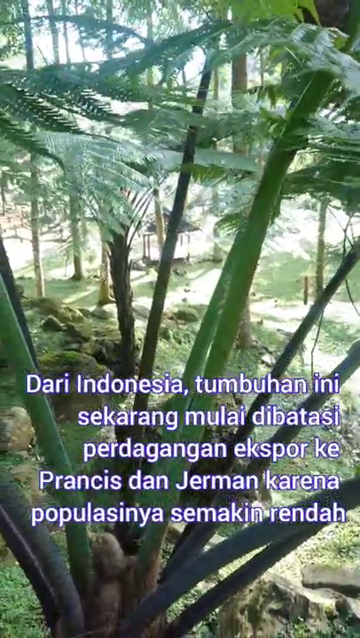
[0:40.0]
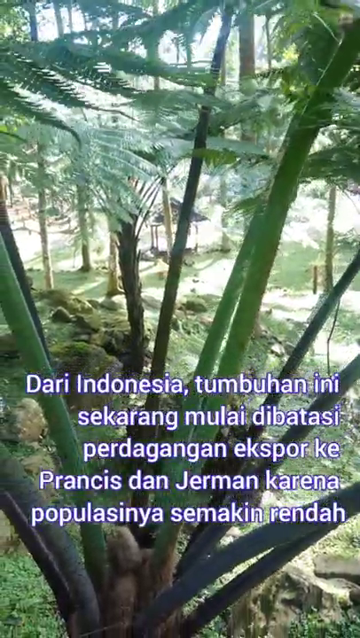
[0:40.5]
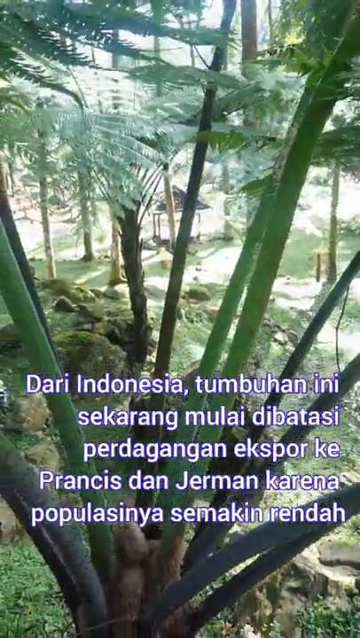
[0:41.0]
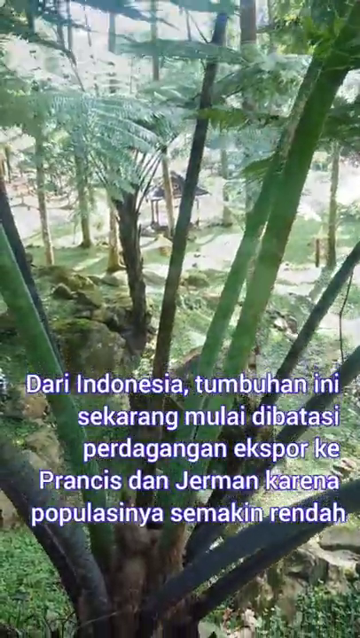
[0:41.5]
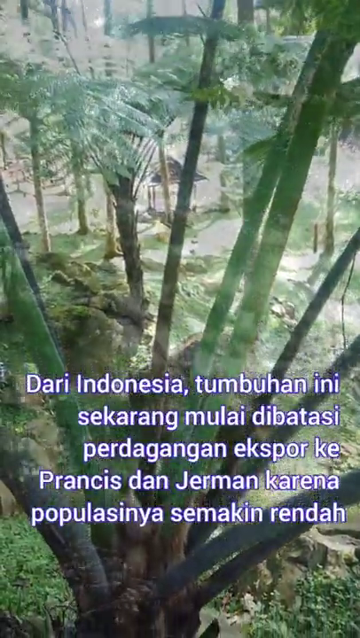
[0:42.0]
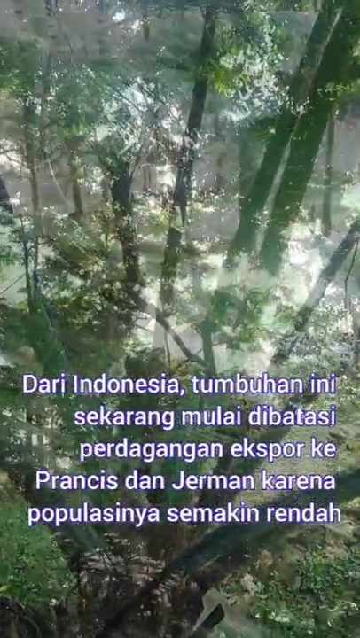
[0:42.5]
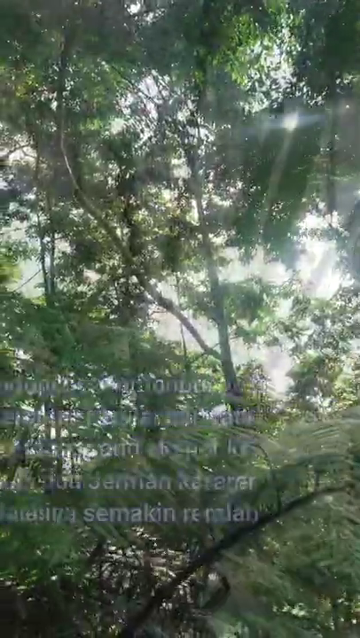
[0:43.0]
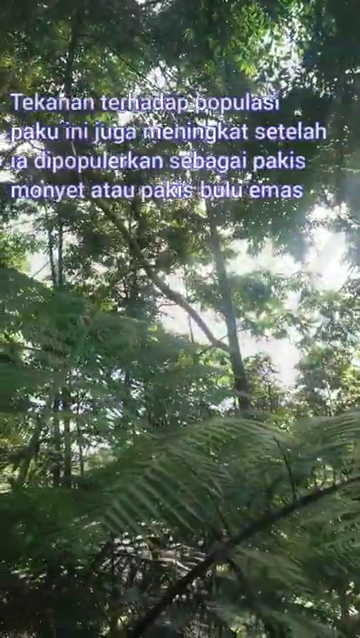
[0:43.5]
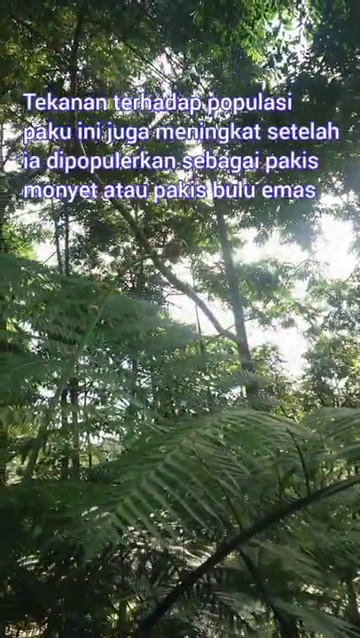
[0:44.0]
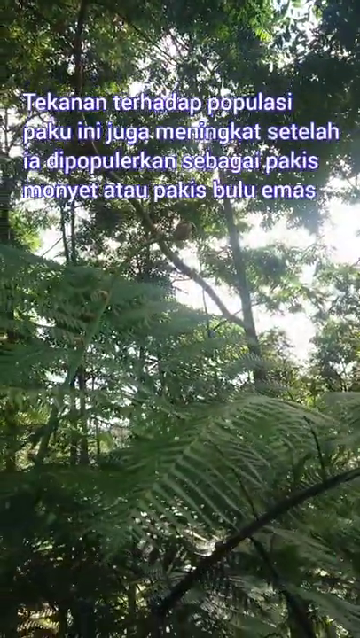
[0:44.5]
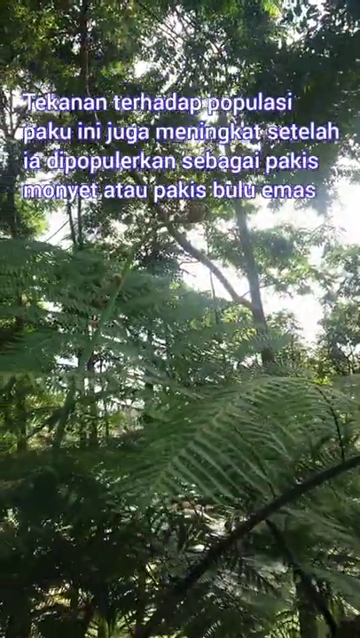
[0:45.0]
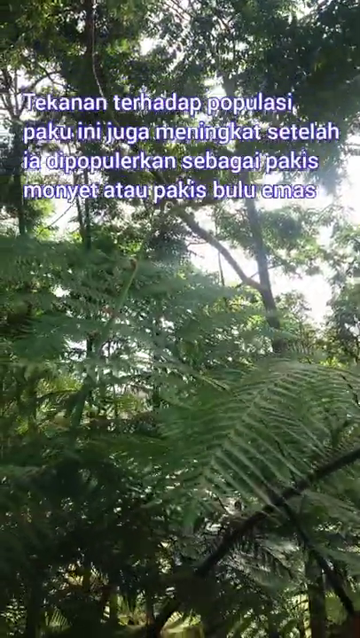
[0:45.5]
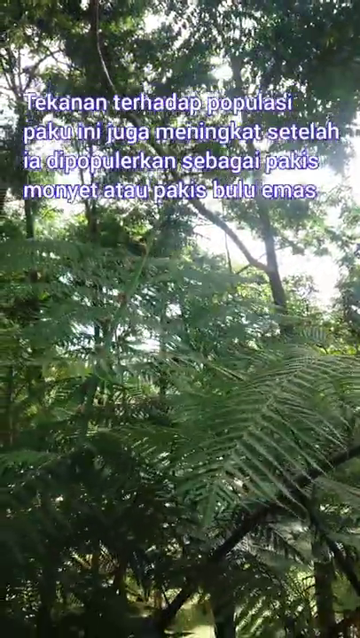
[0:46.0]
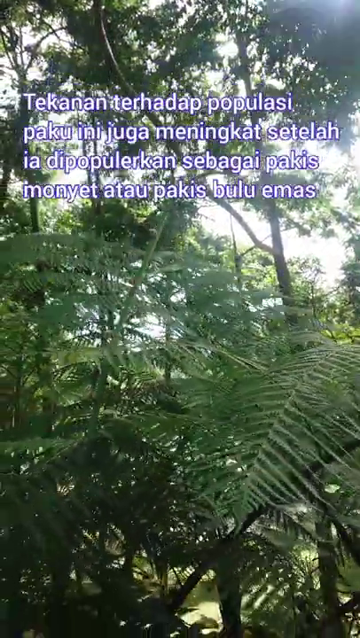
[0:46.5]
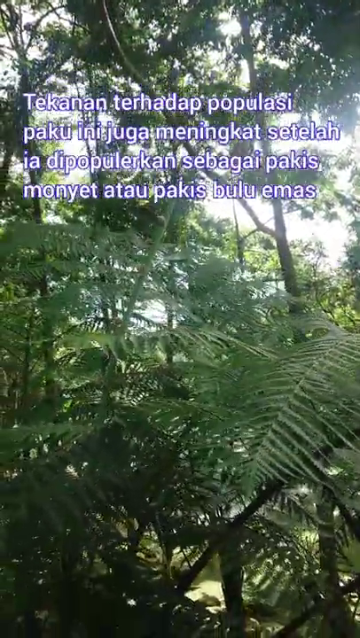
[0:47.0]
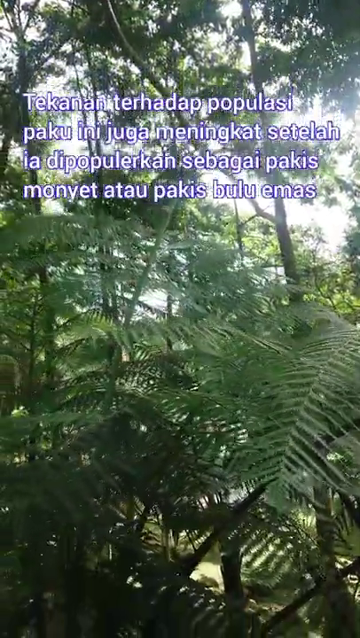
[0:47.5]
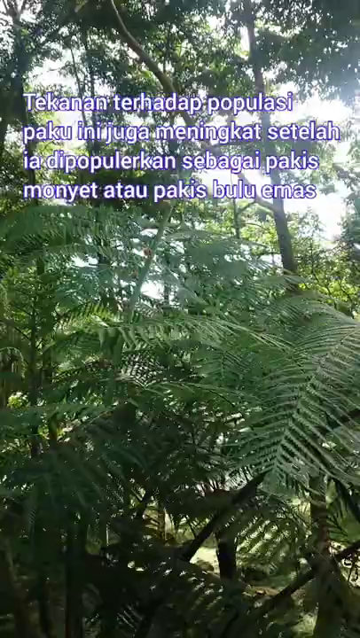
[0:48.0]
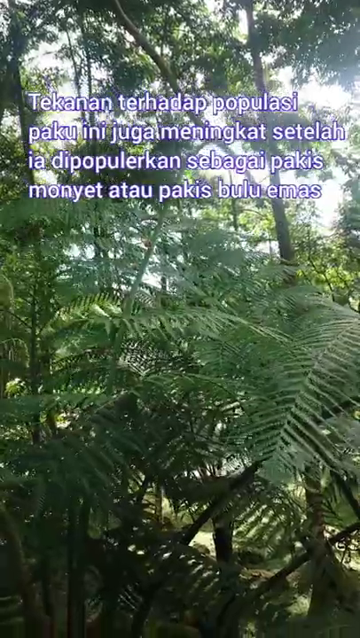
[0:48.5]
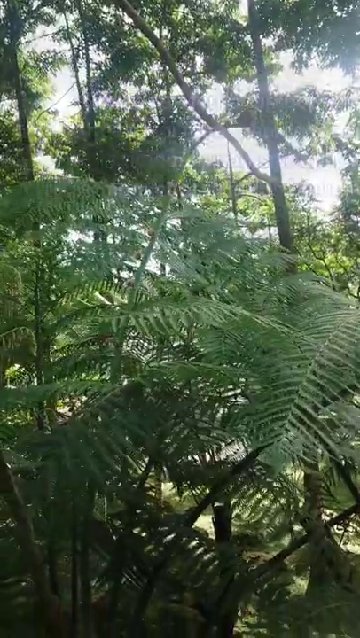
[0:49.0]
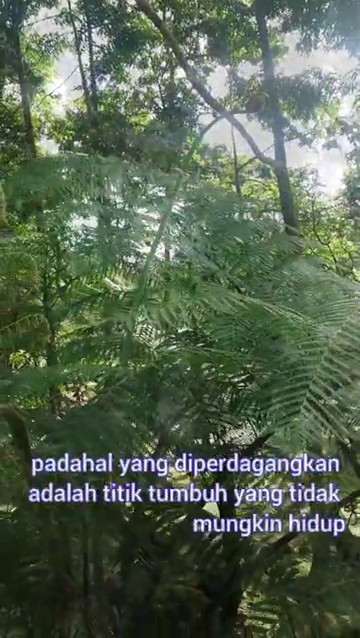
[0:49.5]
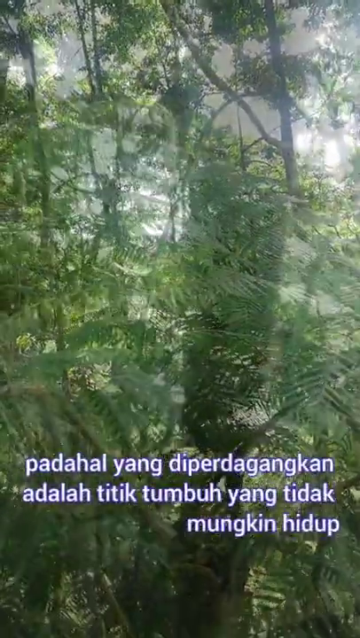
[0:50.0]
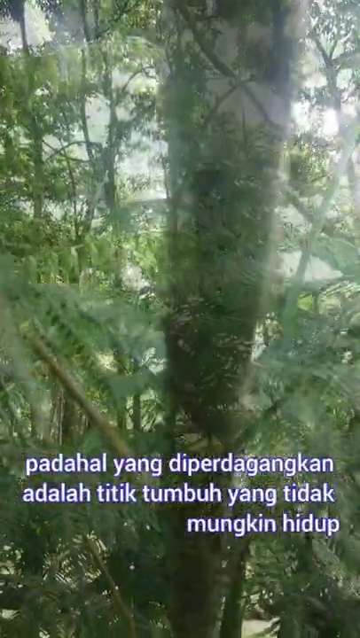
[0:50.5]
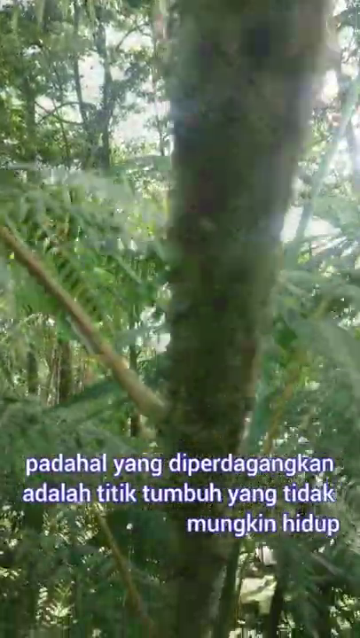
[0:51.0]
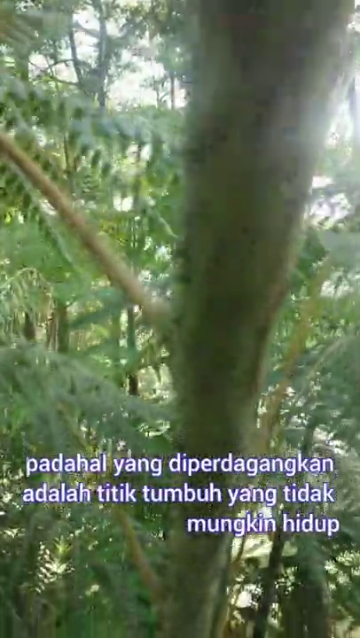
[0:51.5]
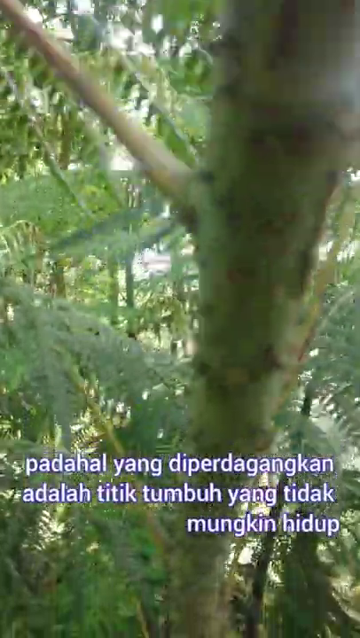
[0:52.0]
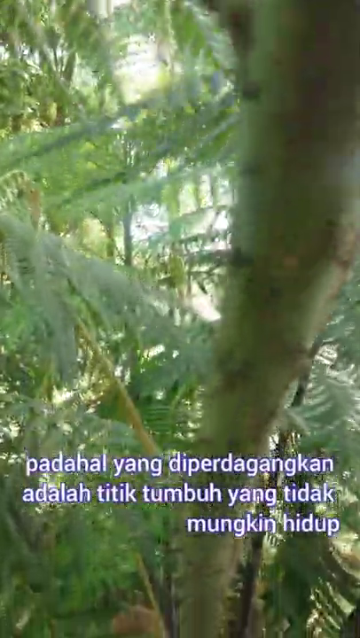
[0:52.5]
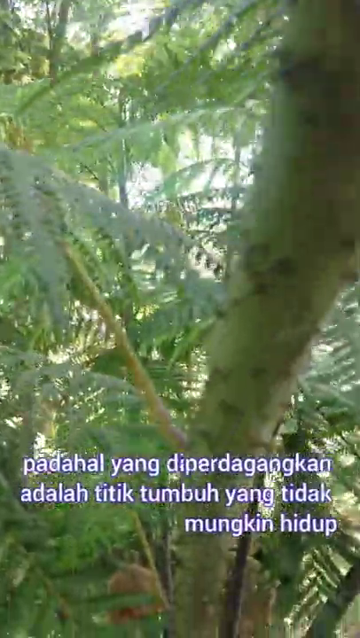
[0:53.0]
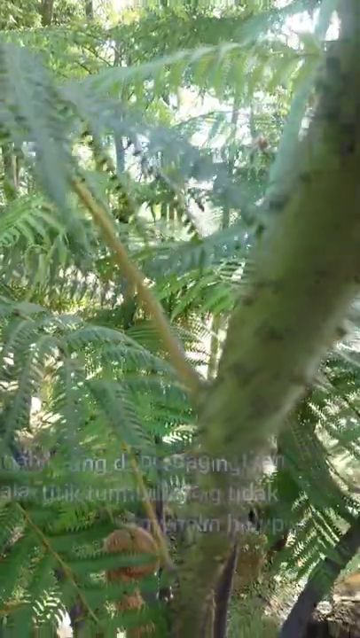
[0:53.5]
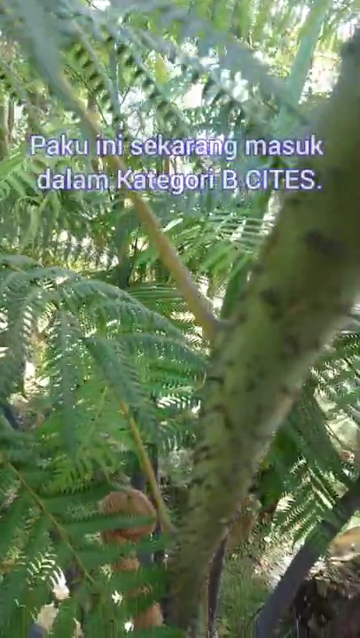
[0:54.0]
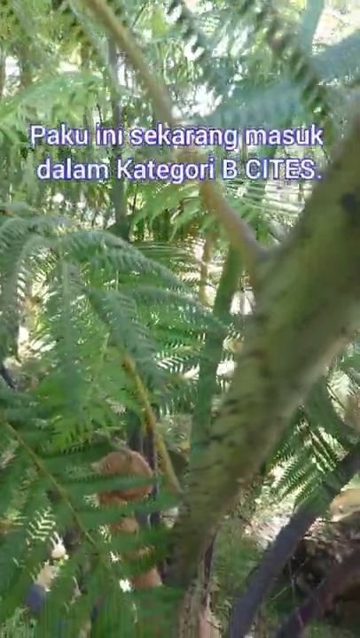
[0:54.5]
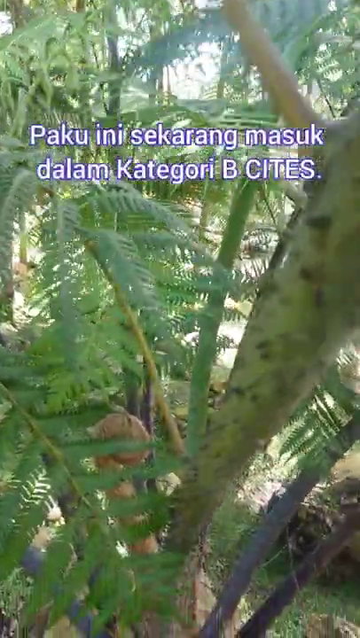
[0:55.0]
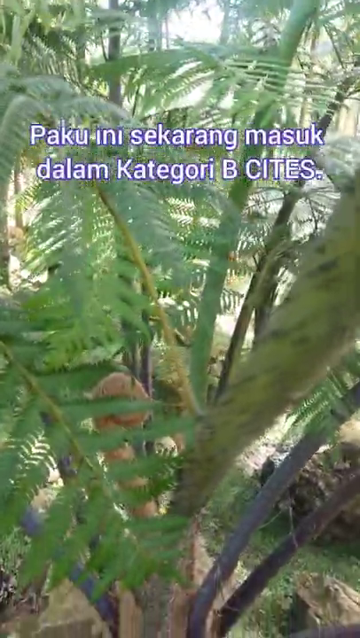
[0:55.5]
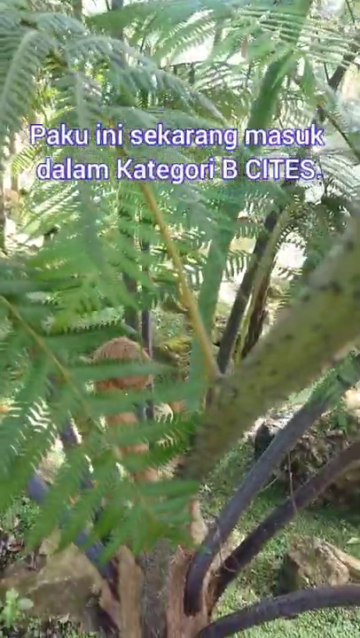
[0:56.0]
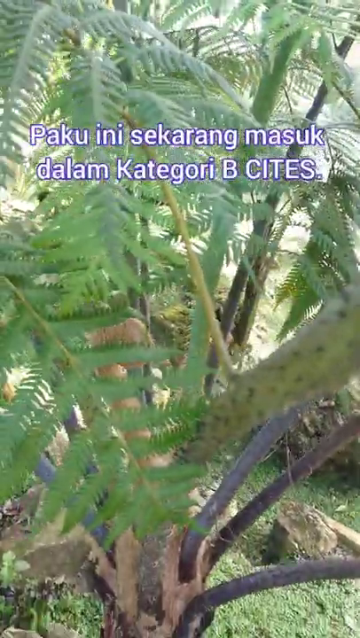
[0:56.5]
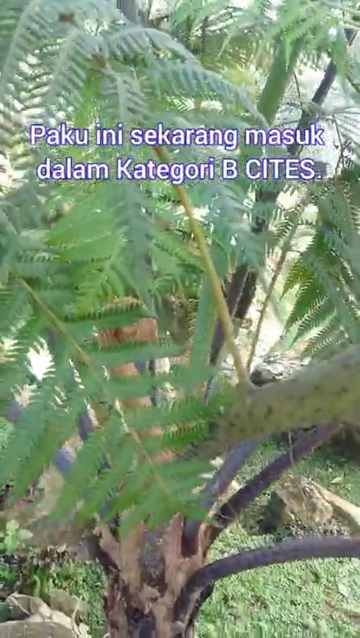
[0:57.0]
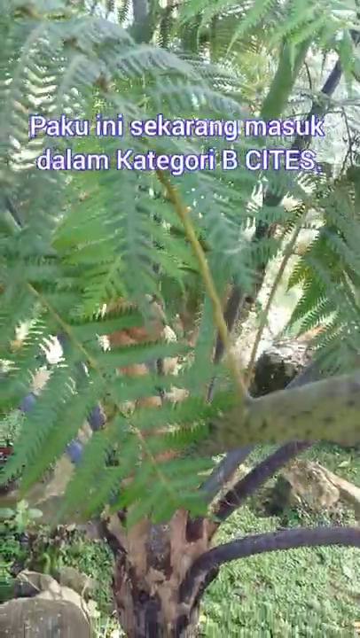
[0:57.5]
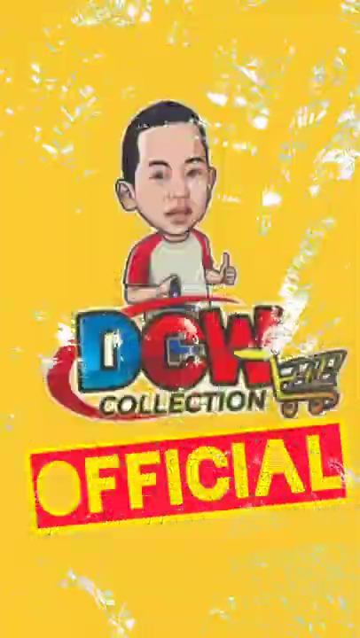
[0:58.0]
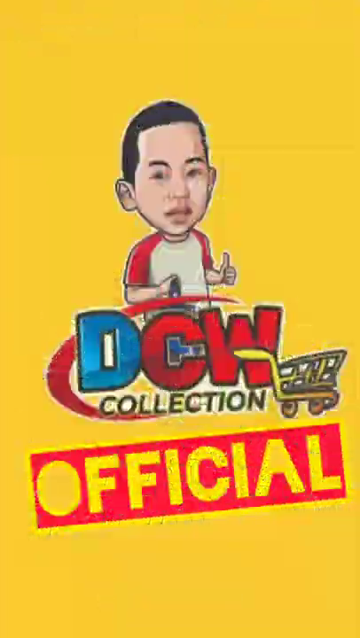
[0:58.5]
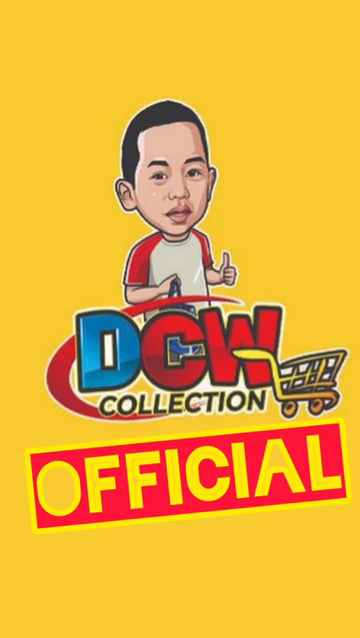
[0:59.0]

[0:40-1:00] In the jungle, the camera stays on the giant ferns, and dappled sunlight comes through the branches of the trees overhead. Another line of text appears, and then more text comes up while ferns on the ground are shown. The camera examines the branches of some of the giant ferns. At the end of the video, the producer's logo appears: an Asian man, probably in his 20s, wearing a white t-shirt with red sleeves, with the name "DCW Collection Official" and a picture of a shopping cart next to him.